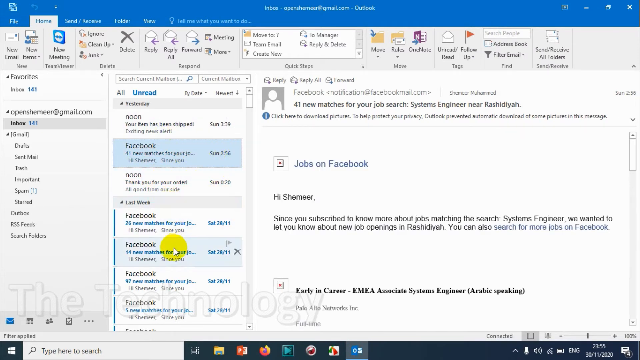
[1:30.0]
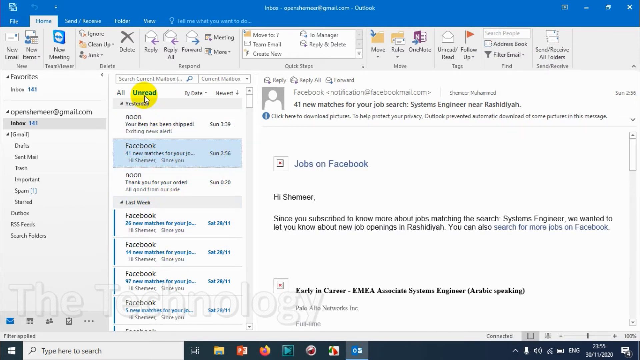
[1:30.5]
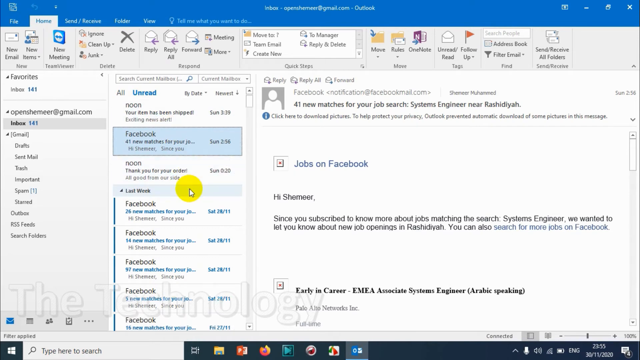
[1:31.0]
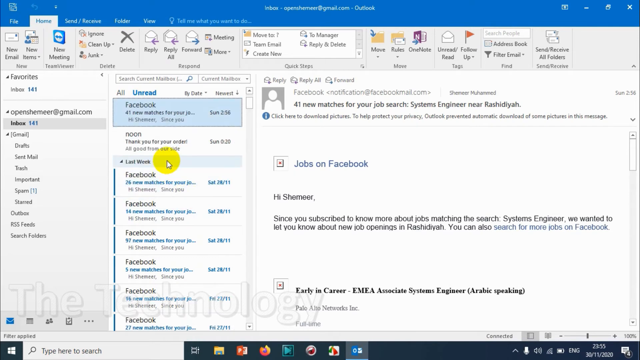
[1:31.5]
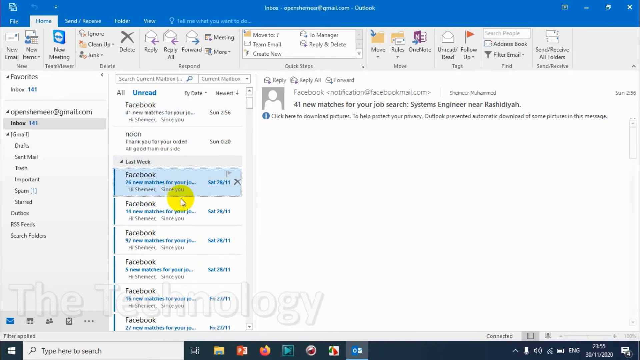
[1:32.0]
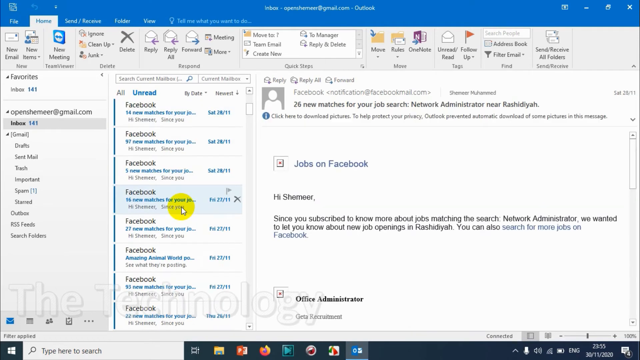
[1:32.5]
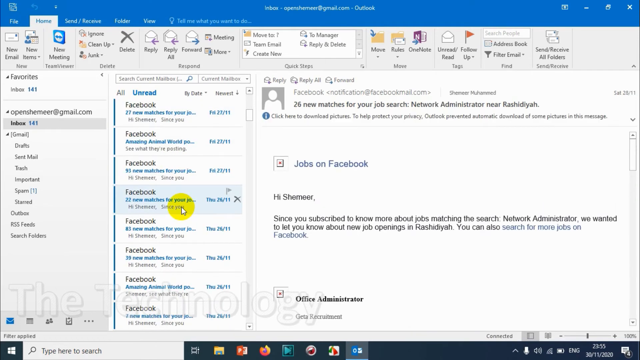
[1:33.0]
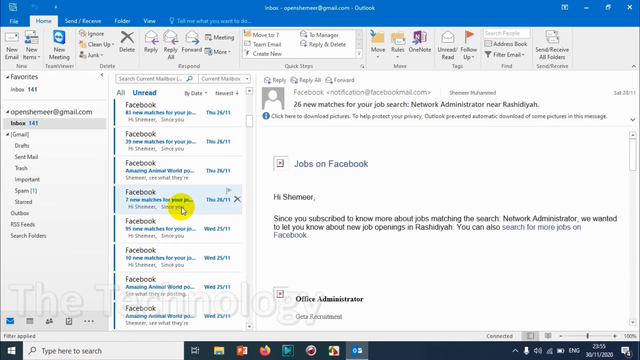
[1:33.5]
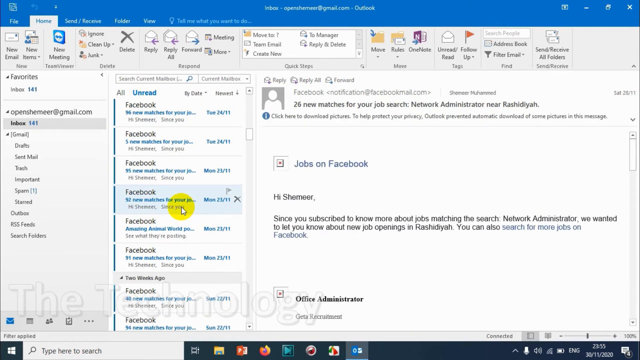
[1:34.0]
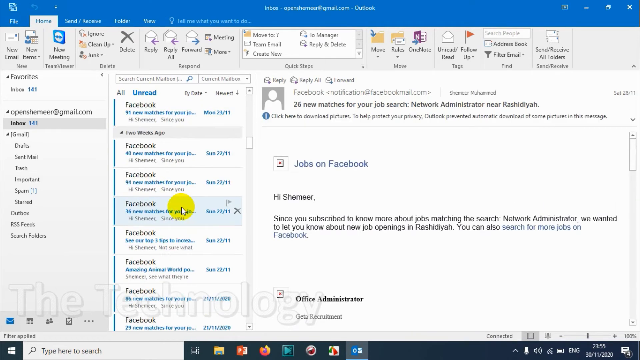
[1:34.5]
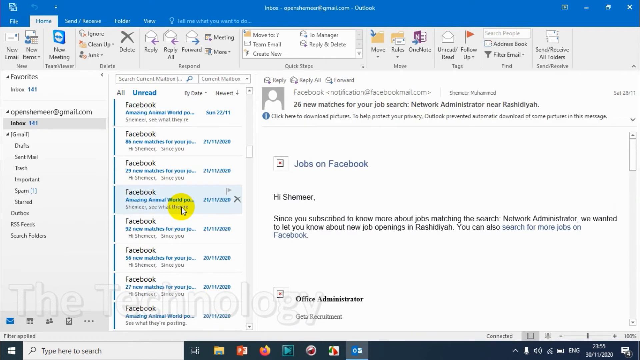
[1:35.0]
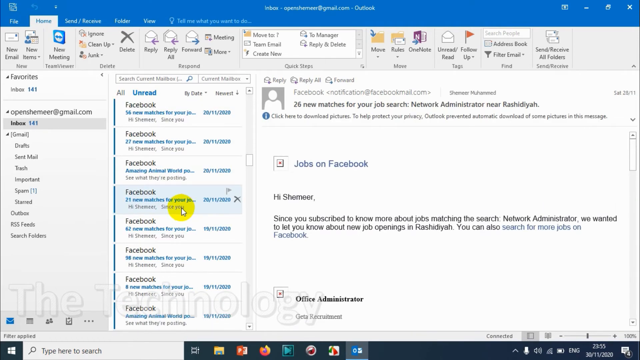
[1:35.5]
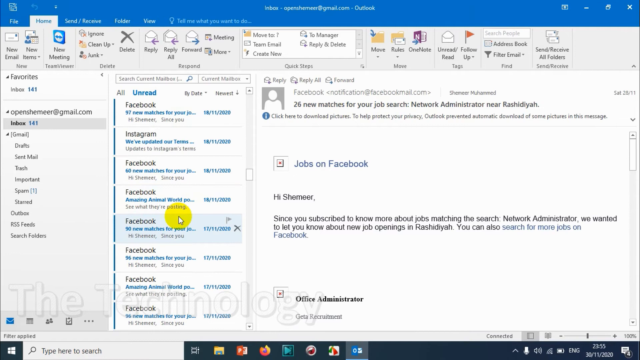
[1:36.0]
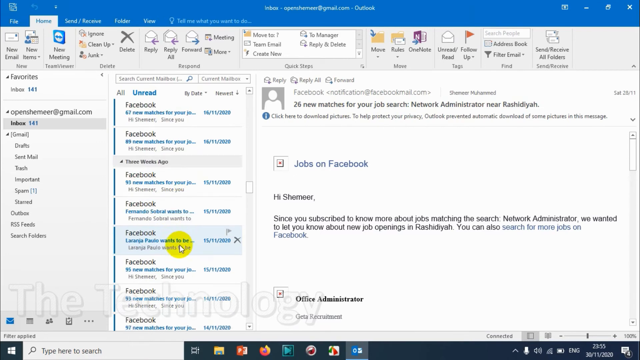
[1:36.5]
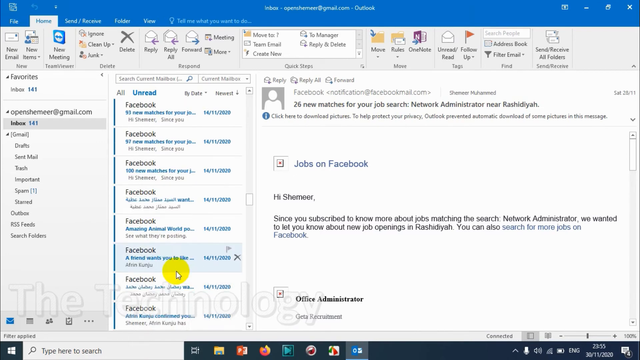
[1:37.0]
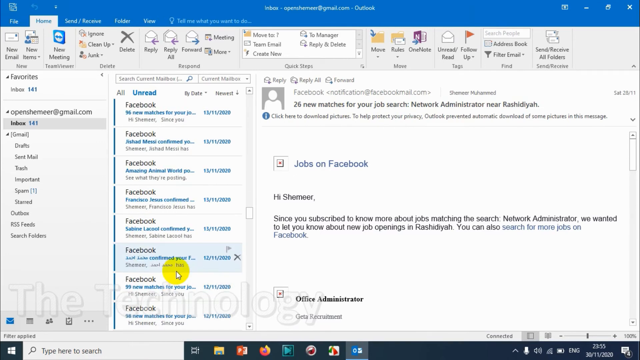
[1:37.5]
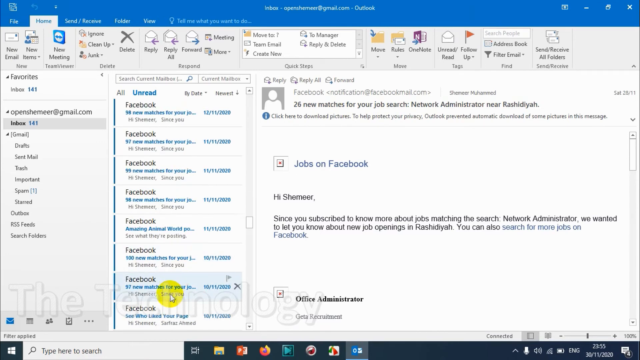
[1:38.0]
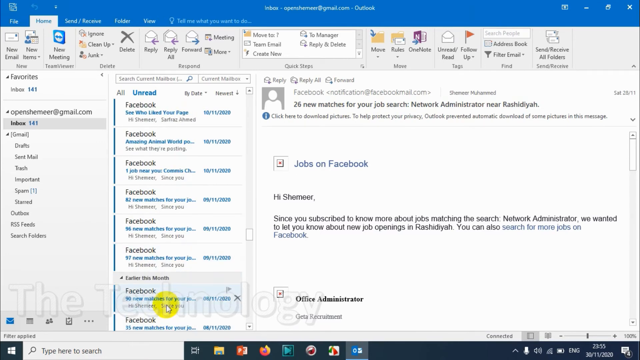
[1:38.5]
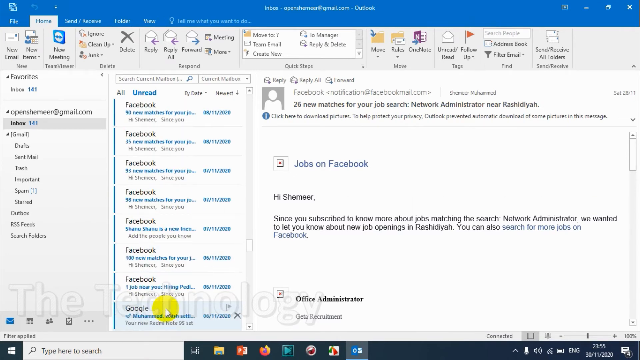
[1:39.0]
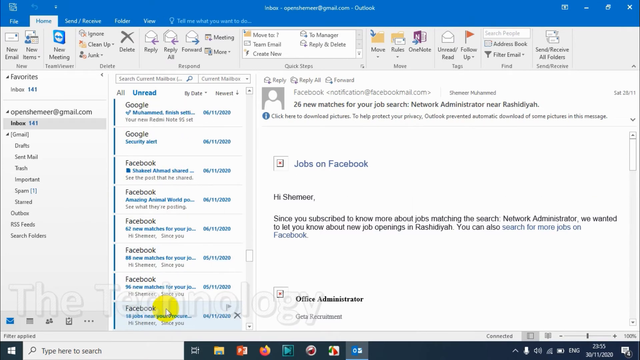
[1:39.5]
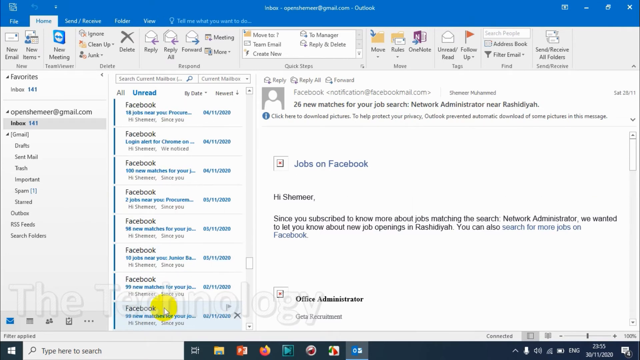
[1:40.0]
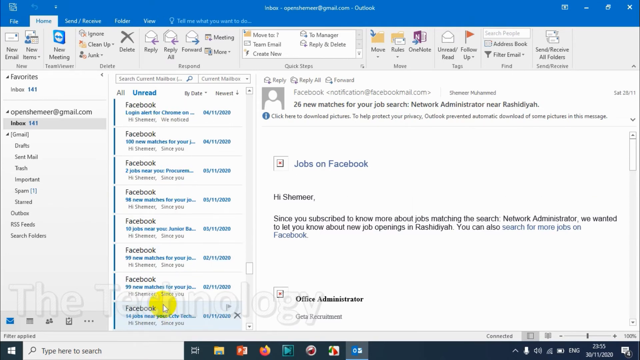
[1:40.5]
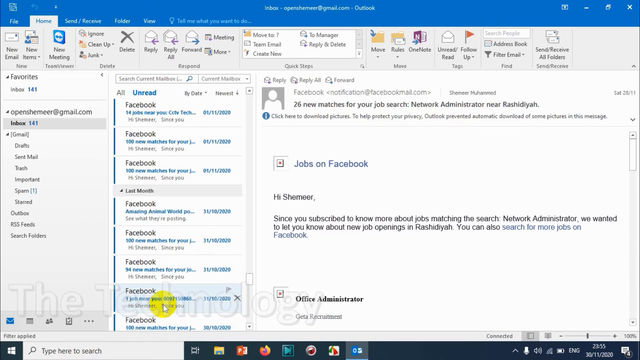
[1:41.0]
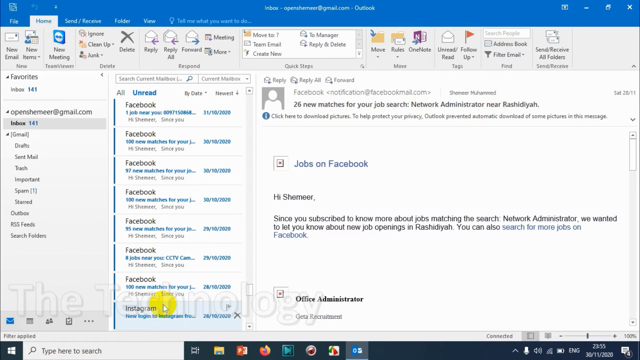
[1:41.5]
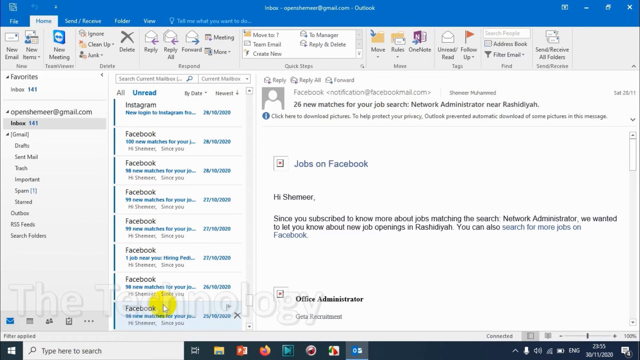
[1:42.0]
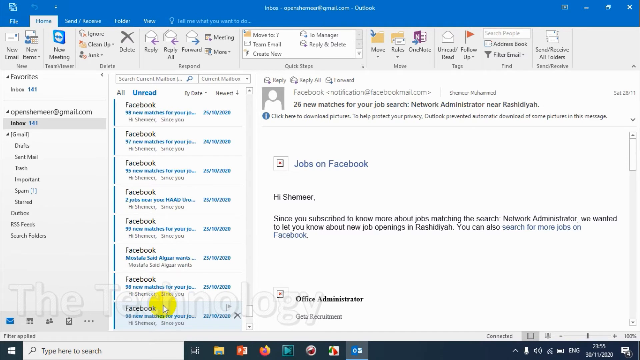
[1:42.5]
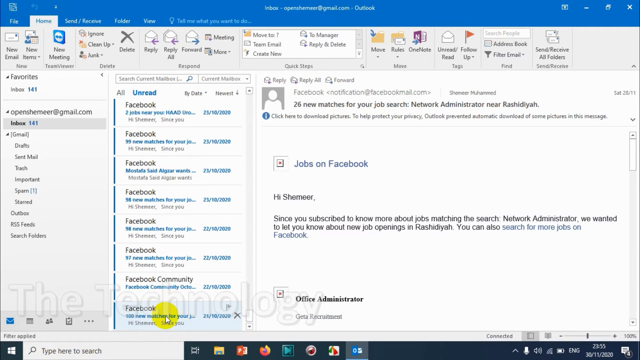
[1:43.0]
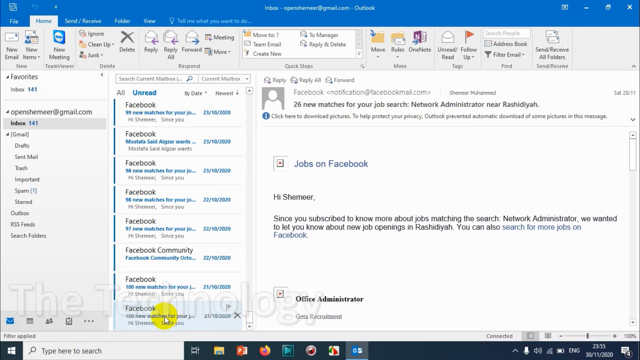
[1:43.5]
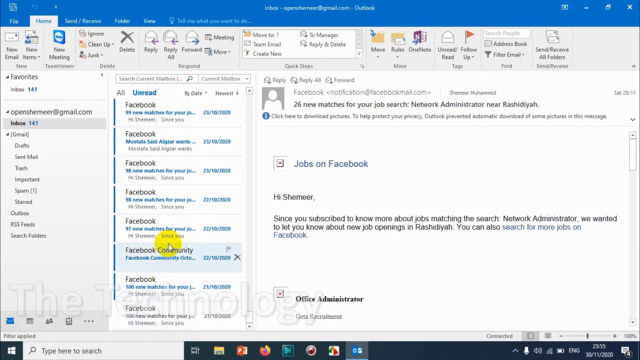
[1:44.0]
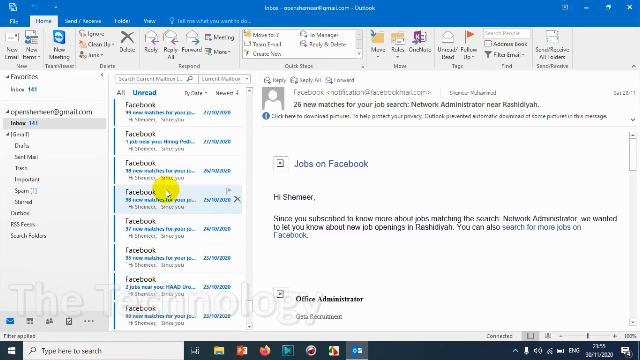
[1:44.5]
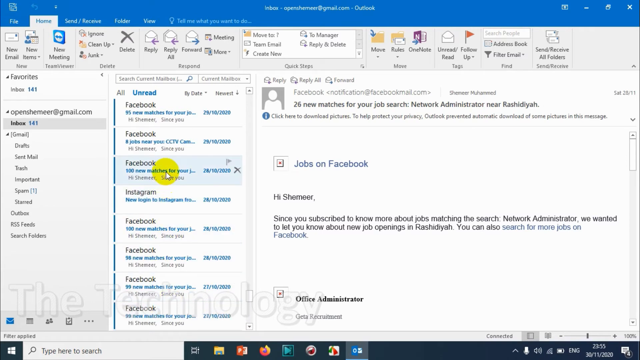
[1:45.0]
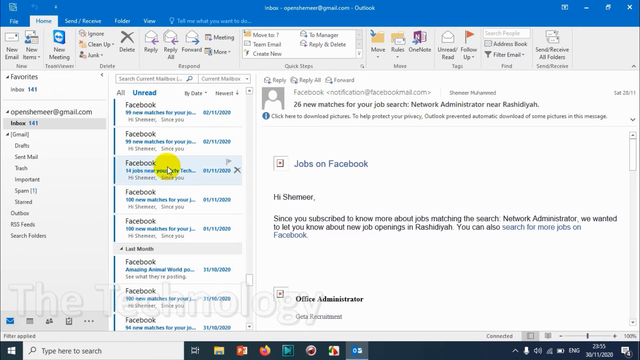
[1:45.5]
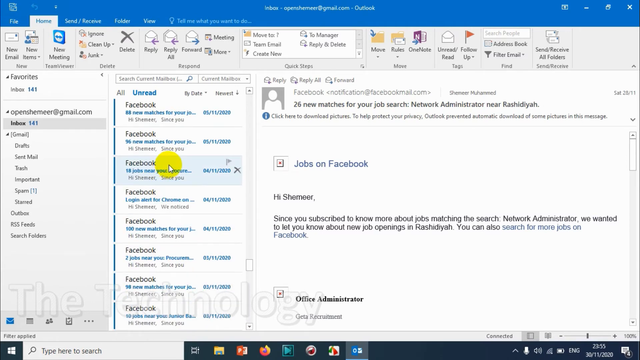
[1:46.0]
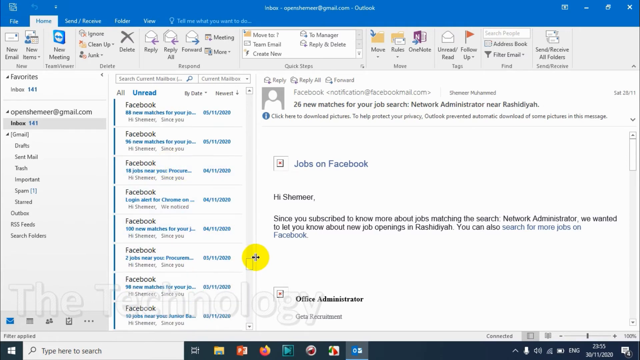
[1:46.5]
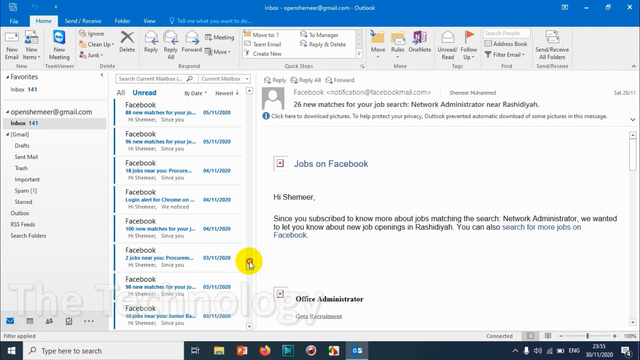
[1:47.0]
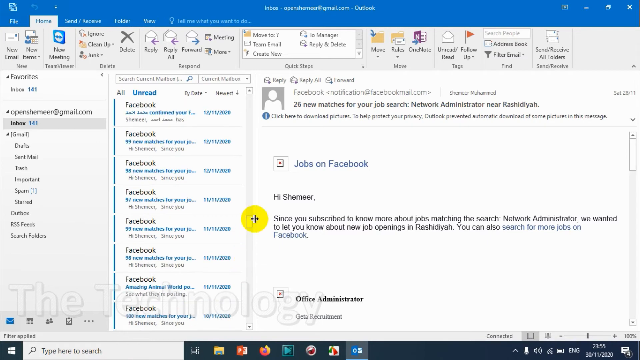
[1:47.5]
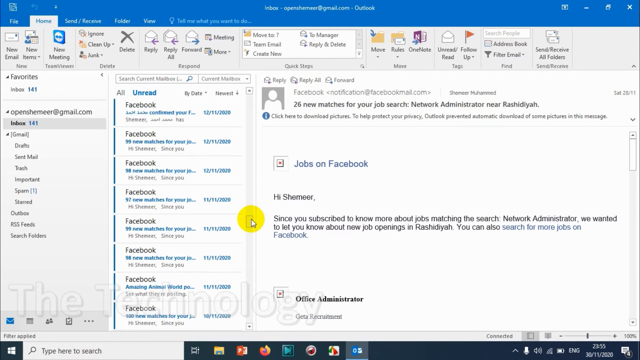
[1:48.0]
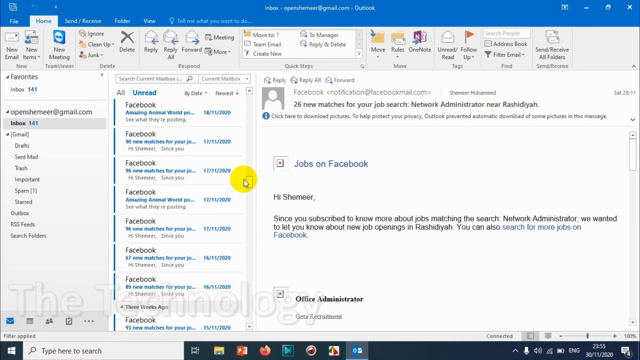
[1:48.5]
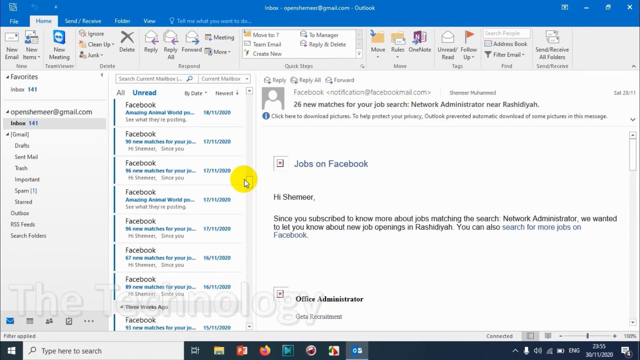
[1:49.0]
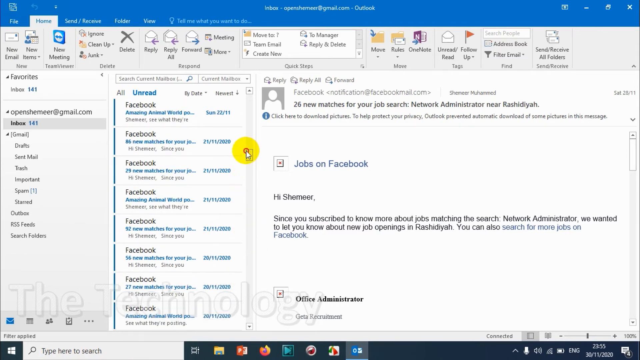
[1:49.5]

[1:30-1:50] An email account page looks like Office Outlook. On the left are categories such as inbox, sent mail, and trash; in the center are unread messages shown as snippets; on the right is a preview of the selected email, which is highlighted in light blue. A yellow pointer starts on one of the email snippets. It moves up and scrolls down through the messages in the center for a long way, then quickly scrolls back up, moves to the right while still scrolling down, and lands on a Facebook email. The yellow pointer remains in the center and the preview stays up on the far right, with the screen looking almost the same as when it first appeared.